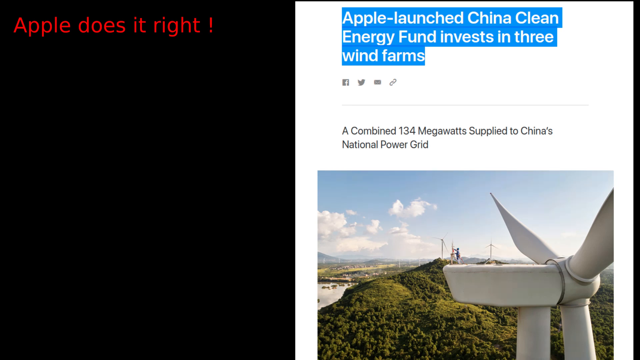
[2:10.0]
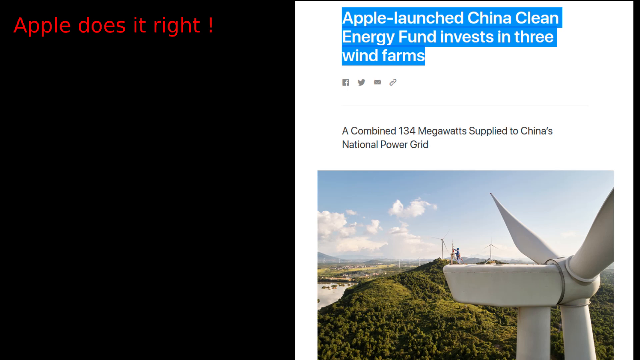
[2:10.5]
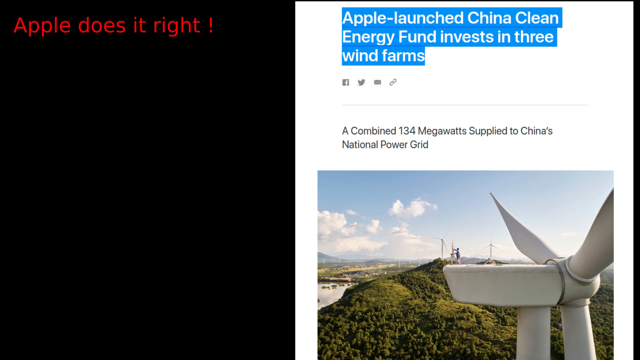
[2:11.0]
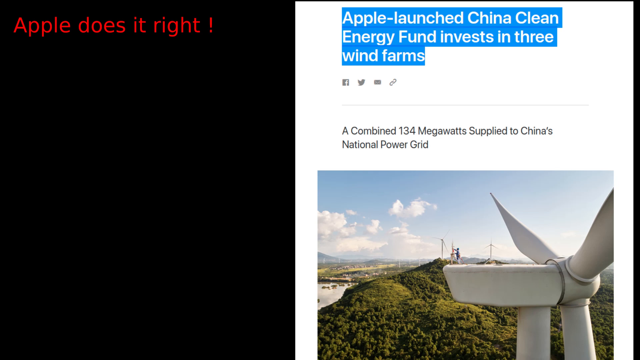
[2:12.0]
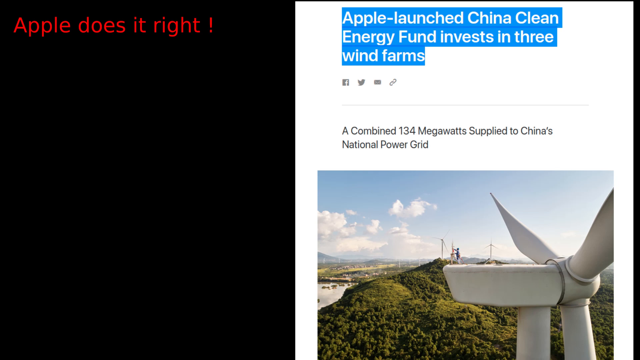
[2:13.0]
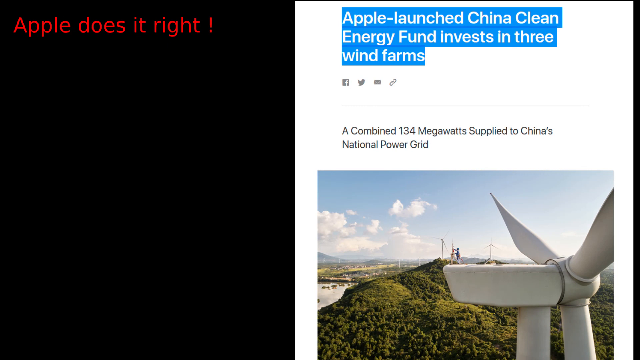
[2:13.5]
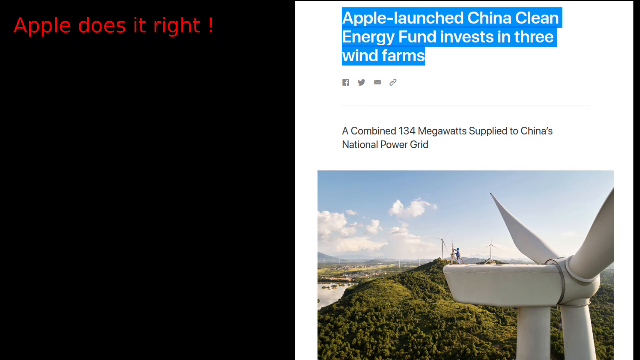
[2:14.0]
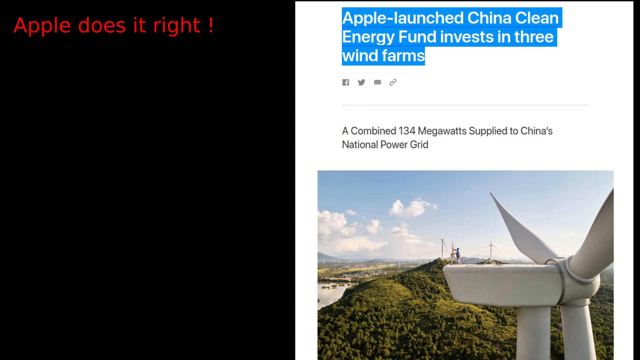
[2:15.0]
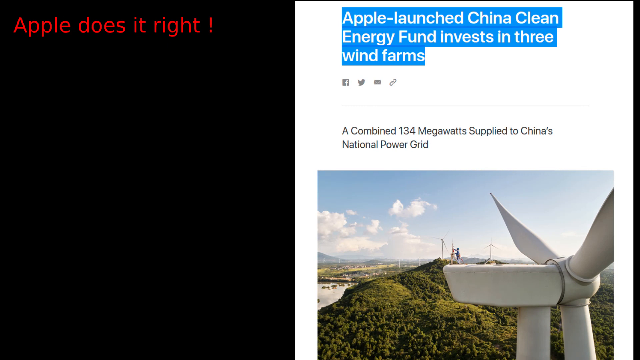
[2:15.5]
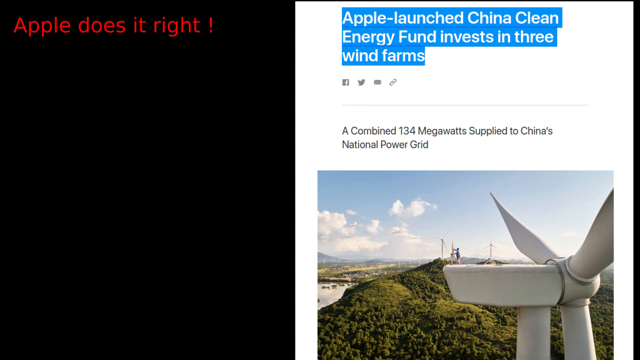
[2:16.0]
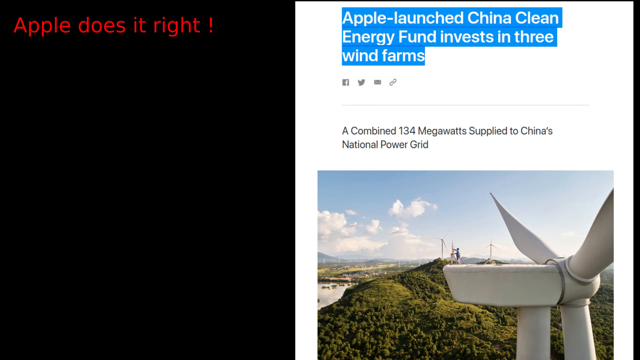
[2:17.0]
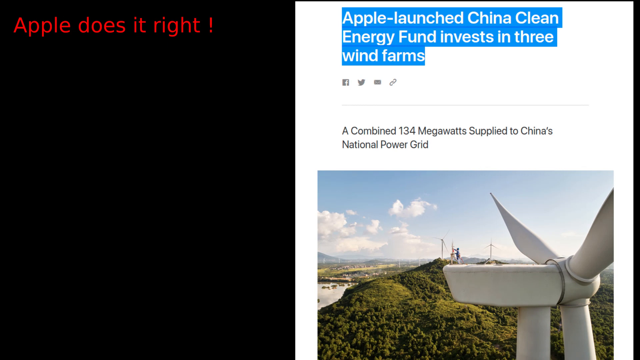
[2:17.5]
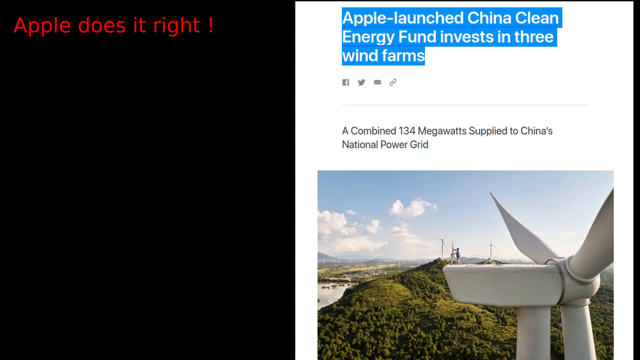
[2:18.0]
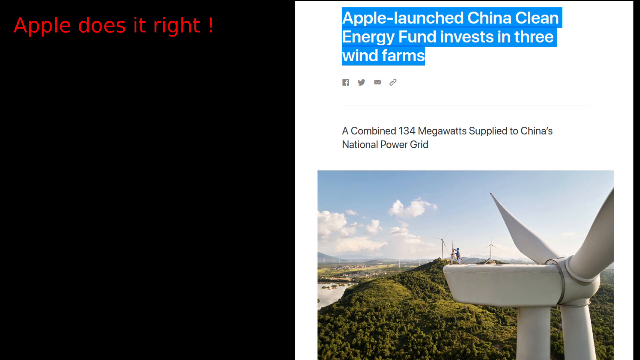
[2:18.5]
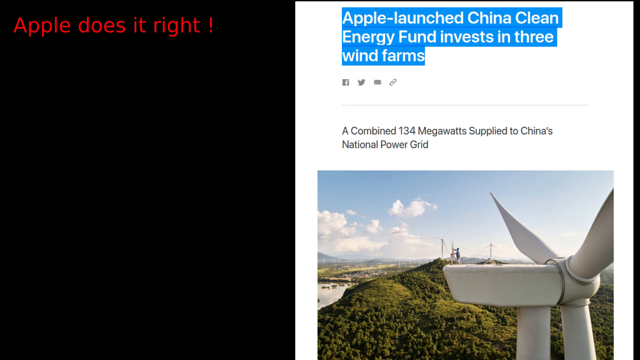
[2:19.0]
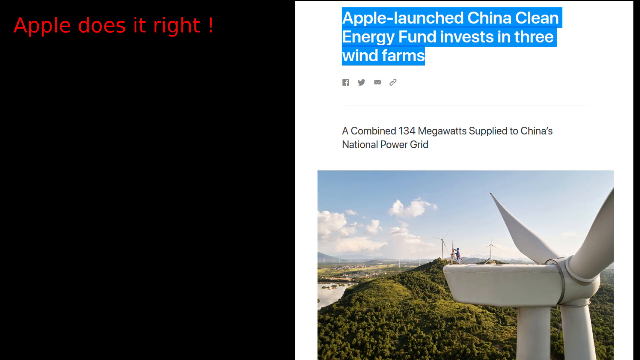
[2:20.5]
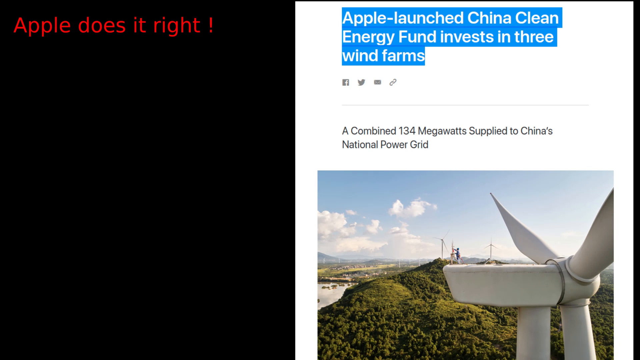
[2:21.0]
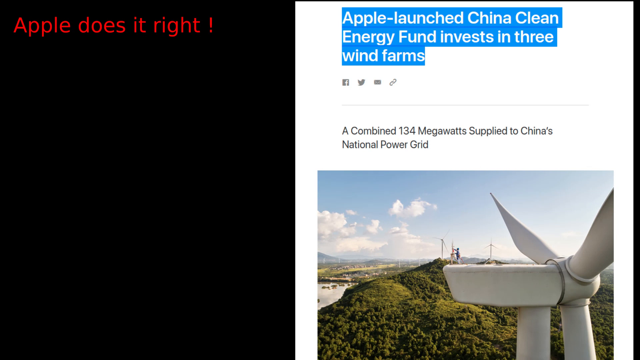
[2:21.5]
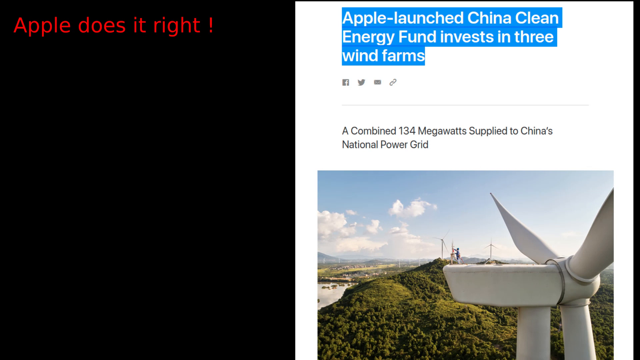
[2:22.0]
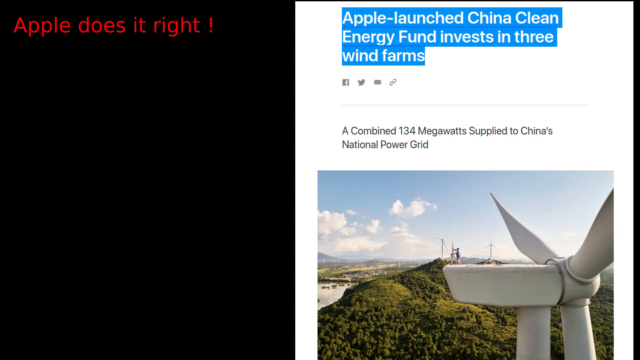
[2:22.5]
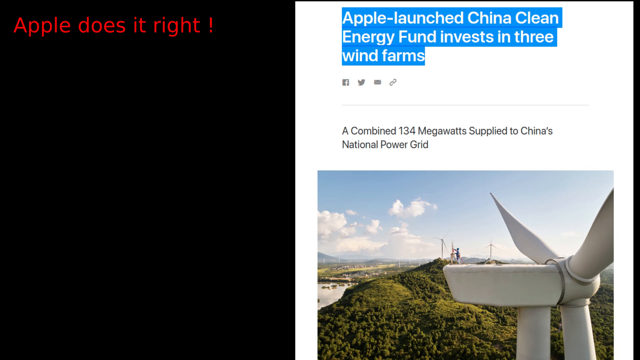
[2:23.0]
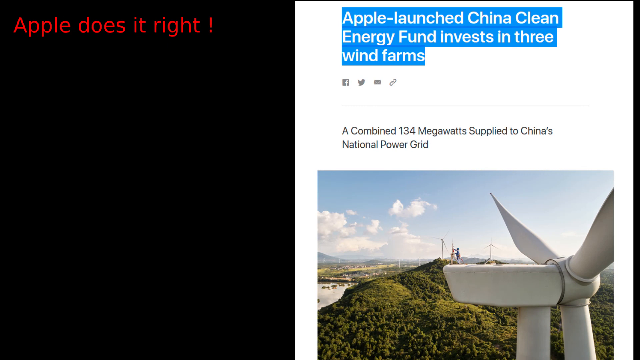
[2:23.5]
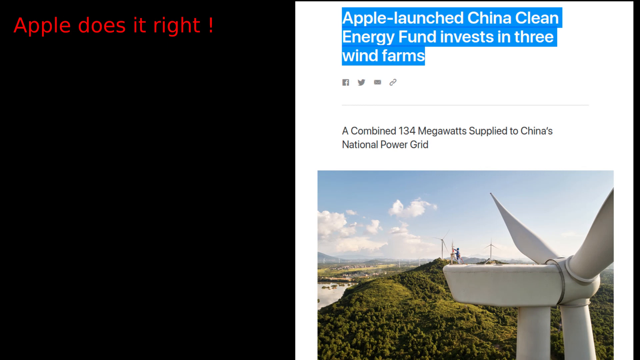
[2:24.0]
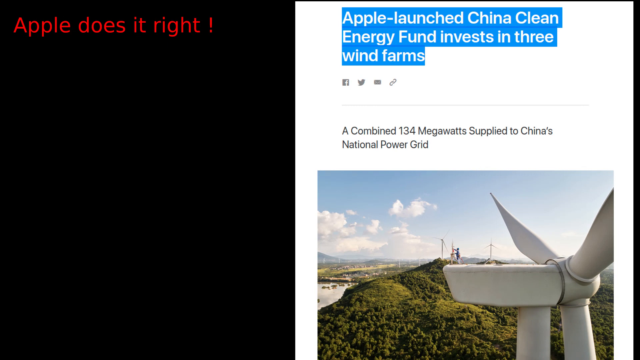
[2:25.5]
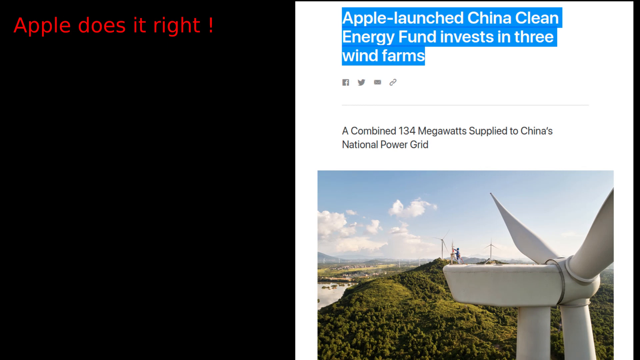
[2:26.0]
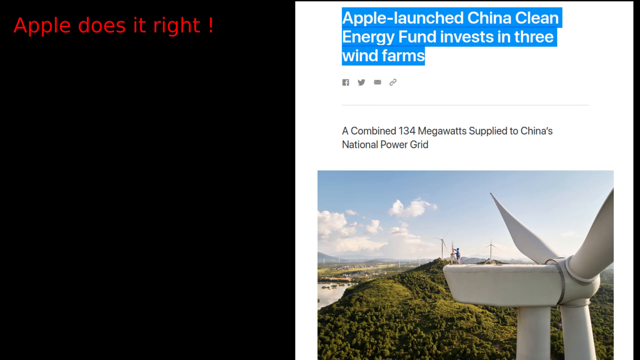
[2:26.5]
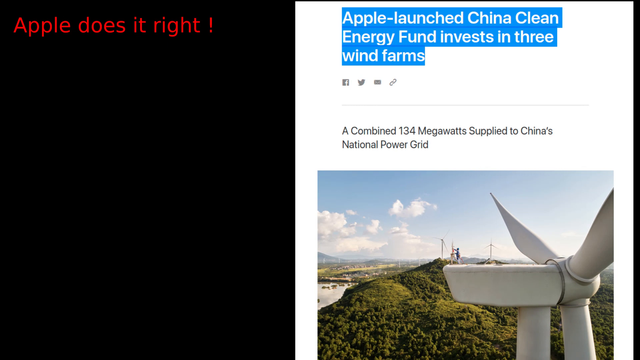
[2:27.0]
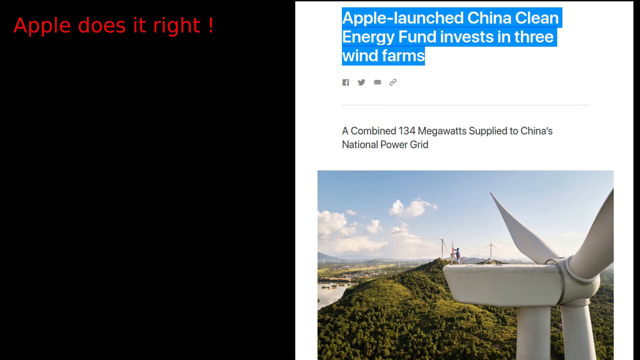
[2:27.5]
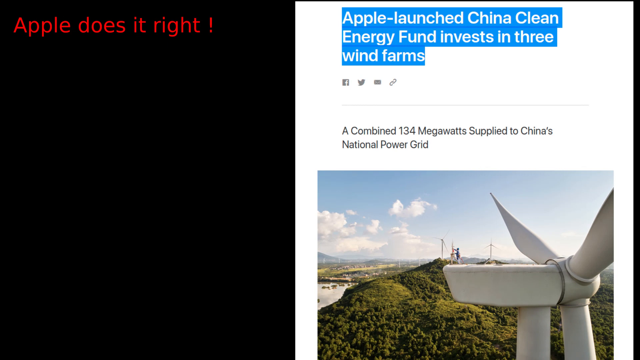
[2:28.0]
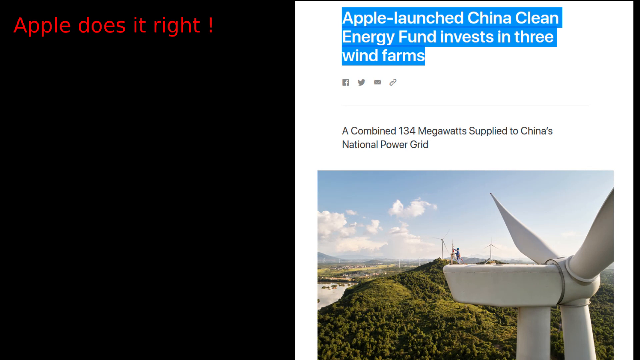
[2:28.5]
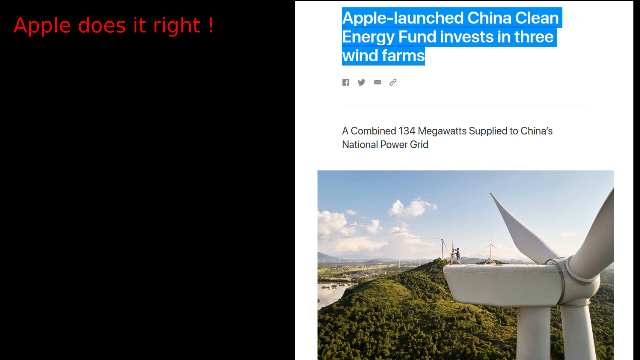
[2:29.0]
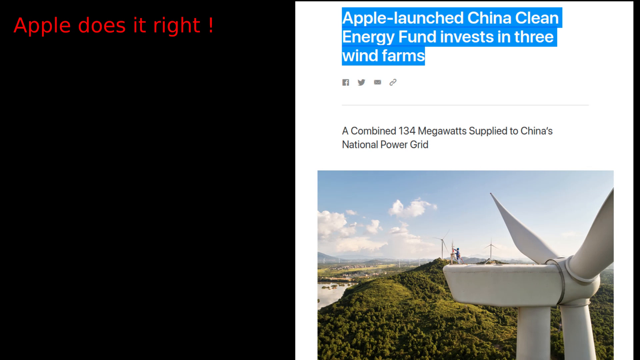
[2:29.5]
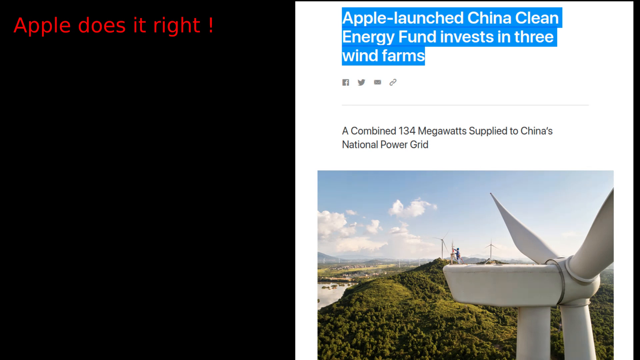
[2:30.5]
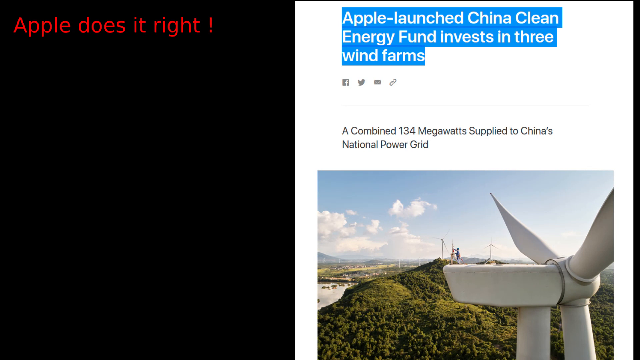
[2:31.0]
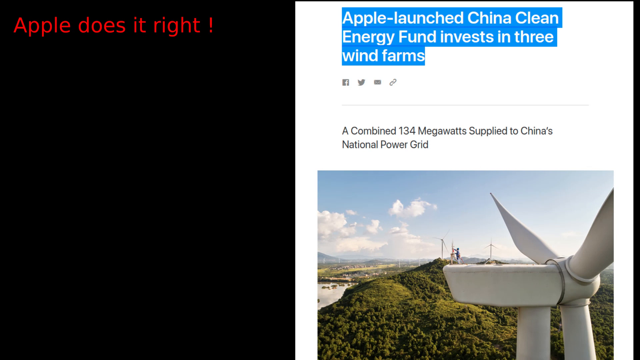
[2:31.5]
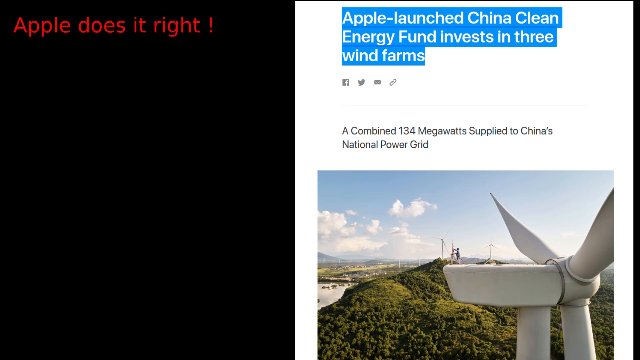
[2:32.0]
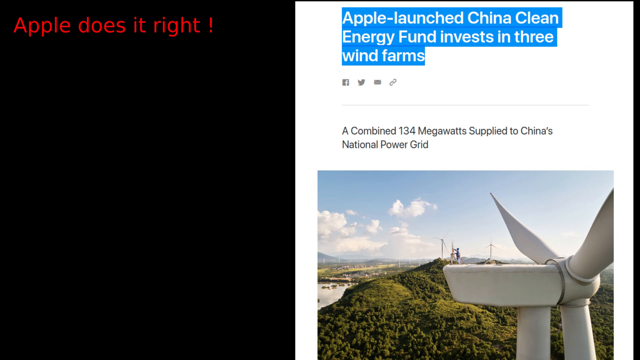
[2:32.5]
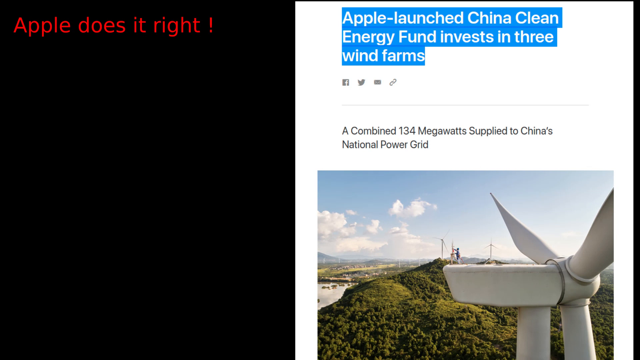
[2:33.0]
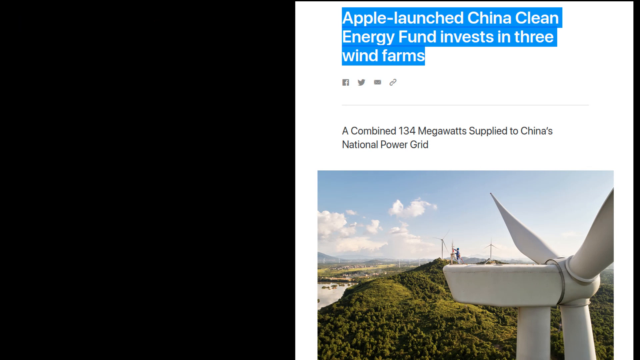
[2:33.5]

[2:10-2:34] The headline "Apple launched China clean energy fund invests in three wind farms" is at the top of the screen in white writing on a blue background that makes it stand out. Below that, in smaller grey writing, it says "a combined 134 megawatt supplied China's national power grid". Below that is an image of the wind turbine with greenery on a mountainous hill in the background, and a person in the background working on one of the turbines. Three very faint turbines are in the distance and one big turbine is in the front right bottom section. Between the Apple wording at the top and the smaller grey writing in the mid-section are icons showing Facebook links.